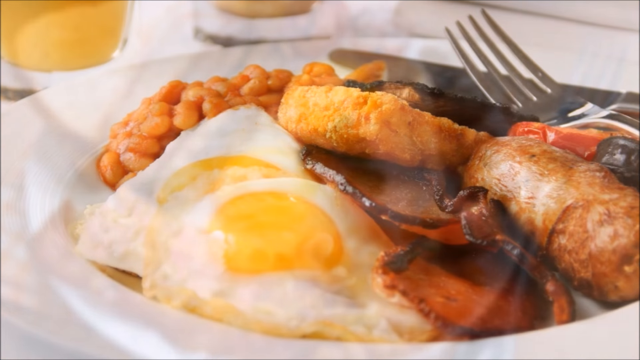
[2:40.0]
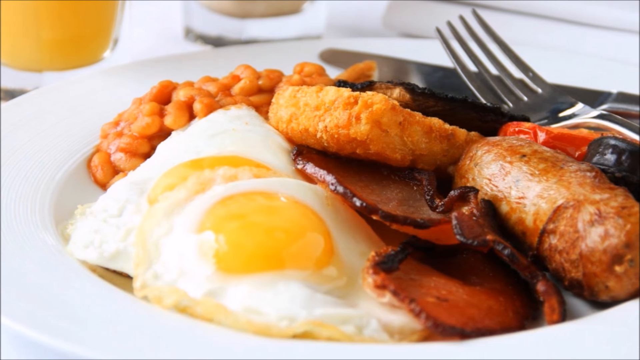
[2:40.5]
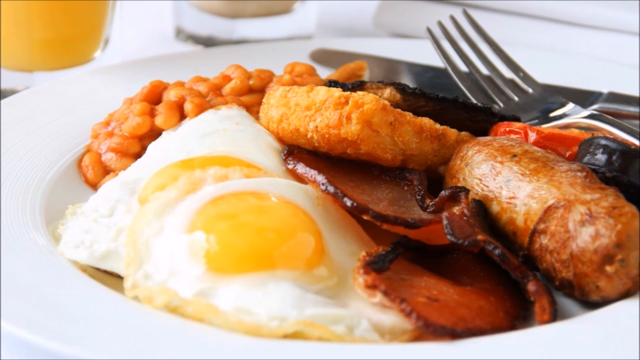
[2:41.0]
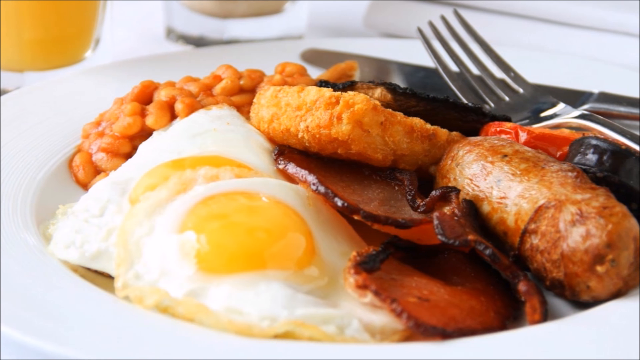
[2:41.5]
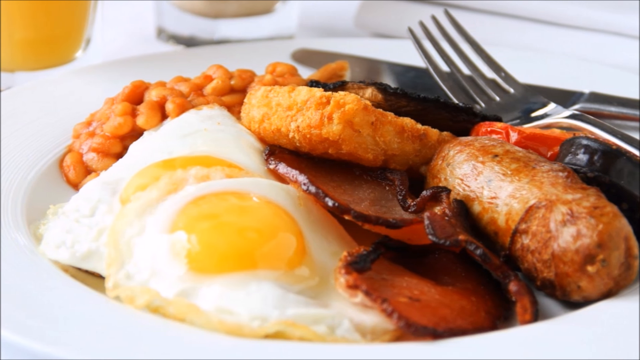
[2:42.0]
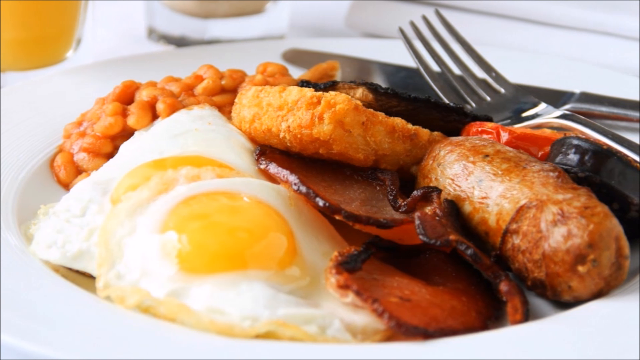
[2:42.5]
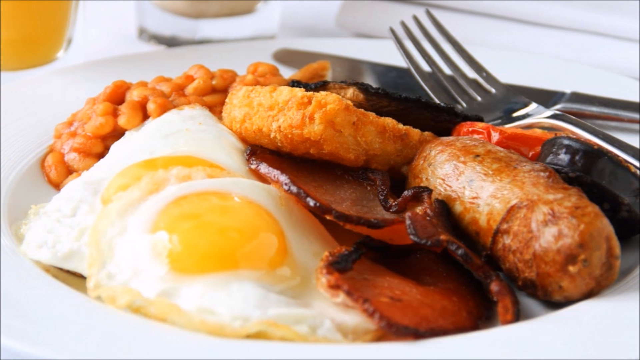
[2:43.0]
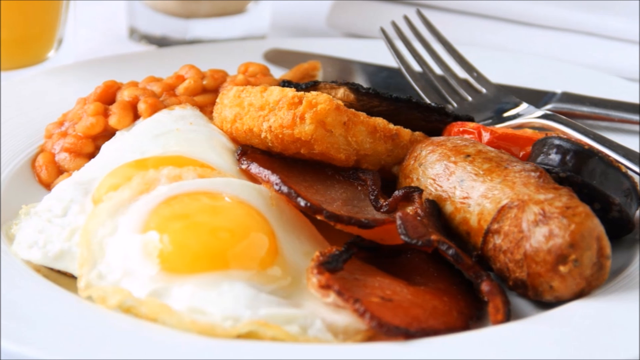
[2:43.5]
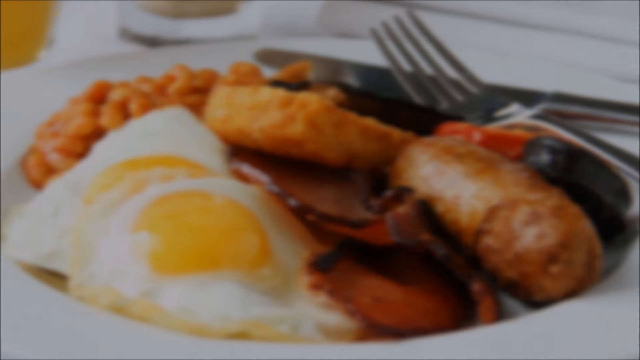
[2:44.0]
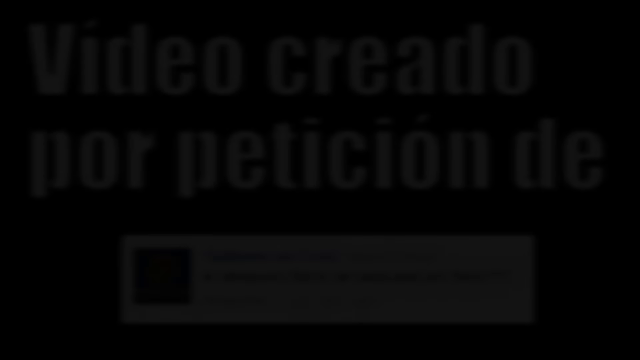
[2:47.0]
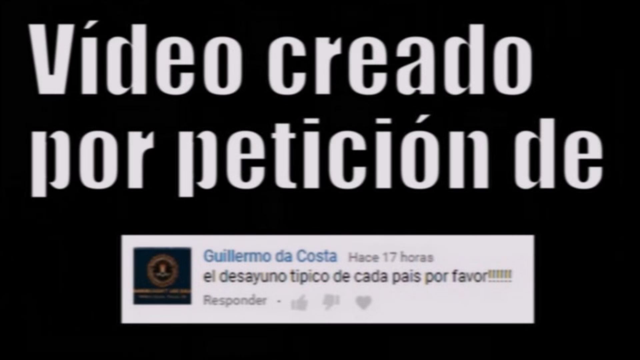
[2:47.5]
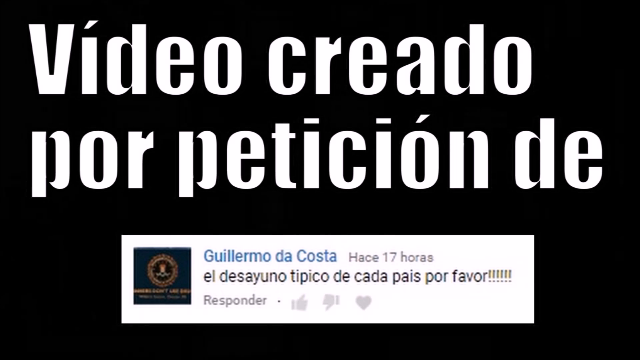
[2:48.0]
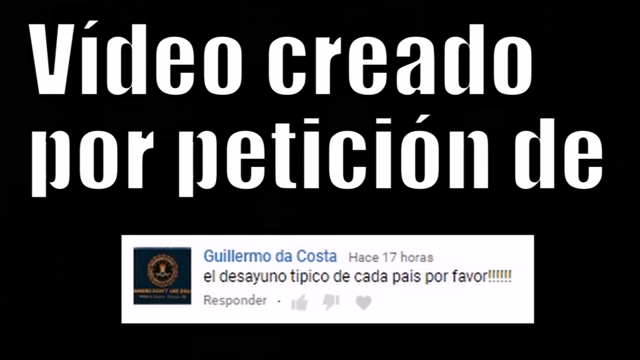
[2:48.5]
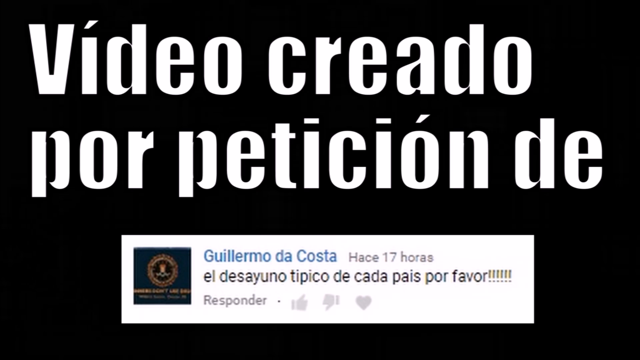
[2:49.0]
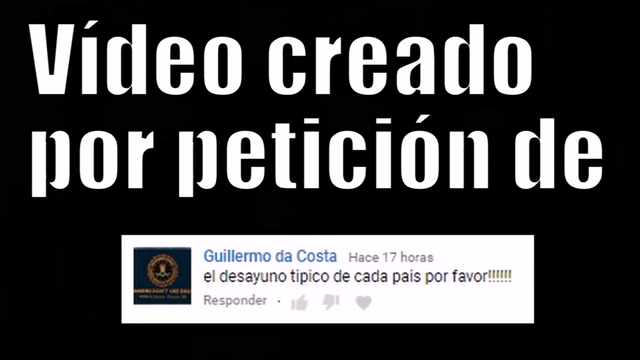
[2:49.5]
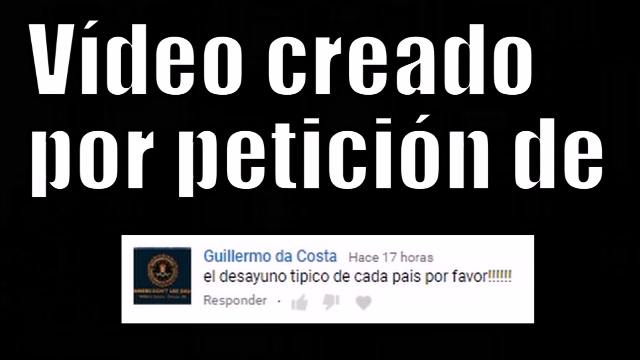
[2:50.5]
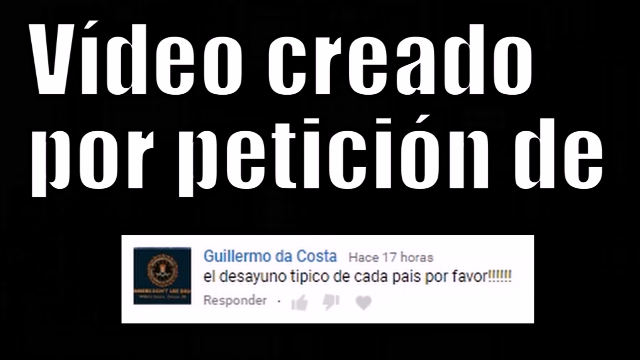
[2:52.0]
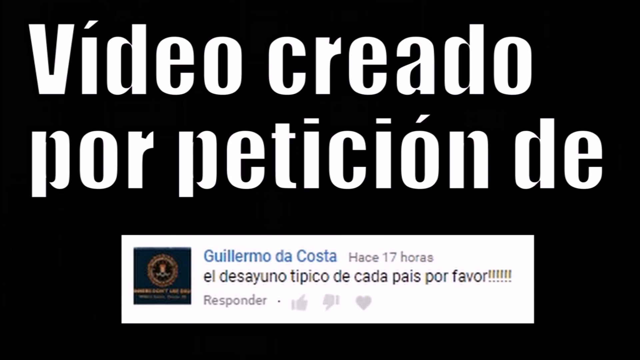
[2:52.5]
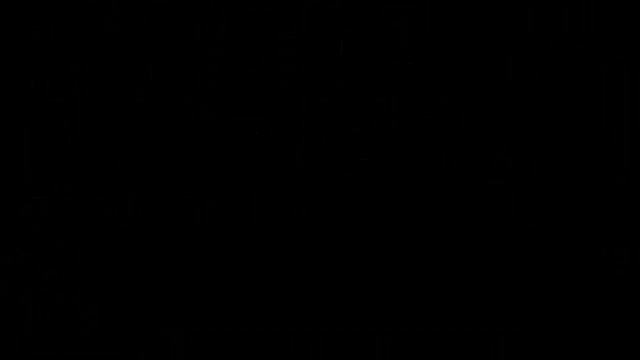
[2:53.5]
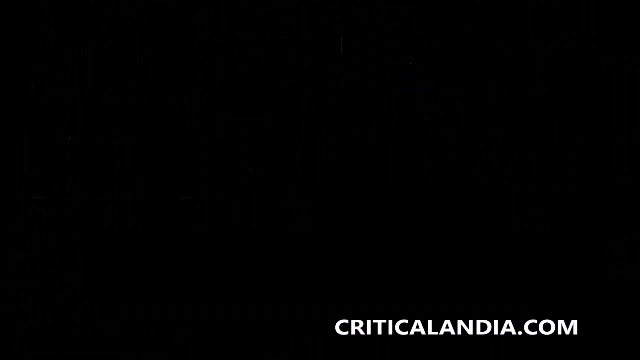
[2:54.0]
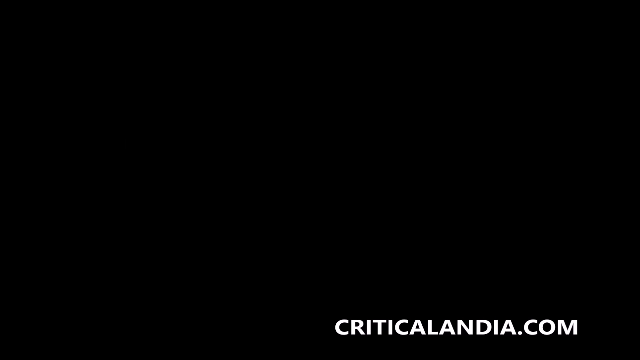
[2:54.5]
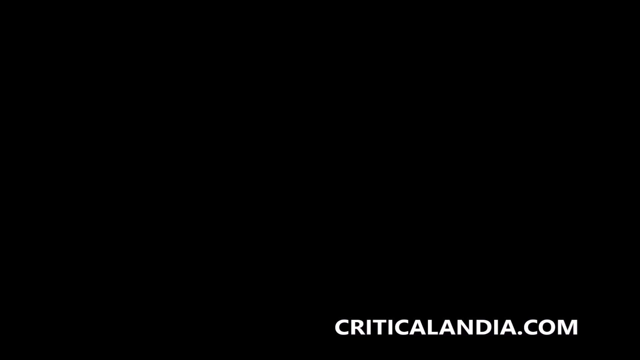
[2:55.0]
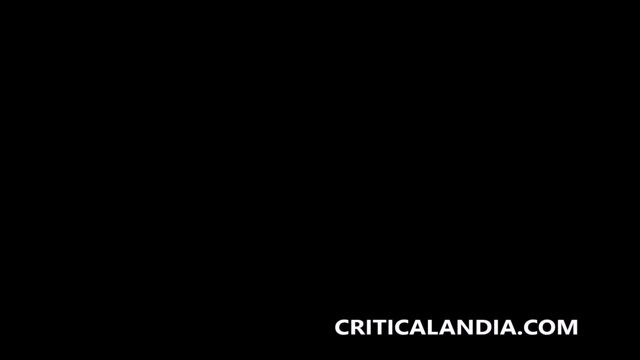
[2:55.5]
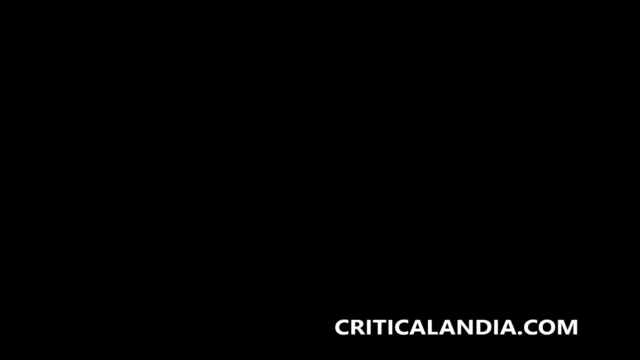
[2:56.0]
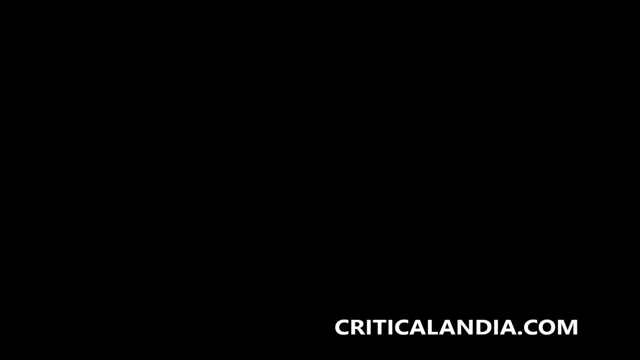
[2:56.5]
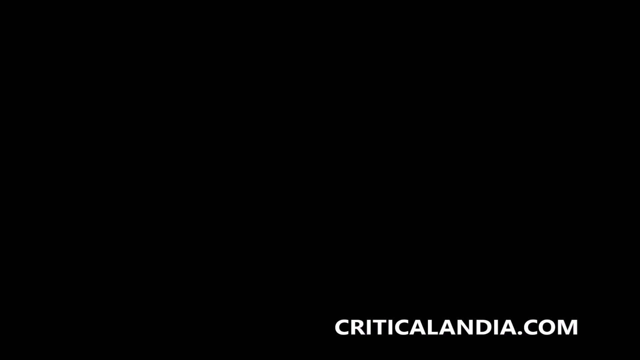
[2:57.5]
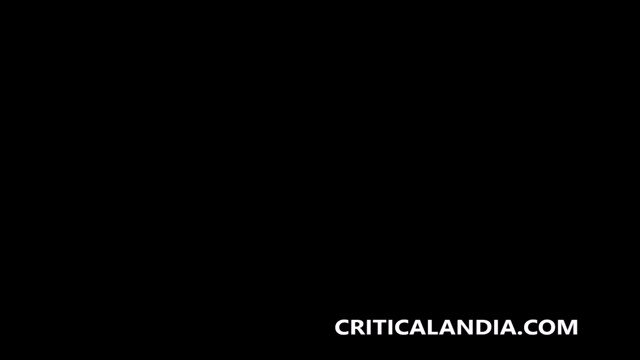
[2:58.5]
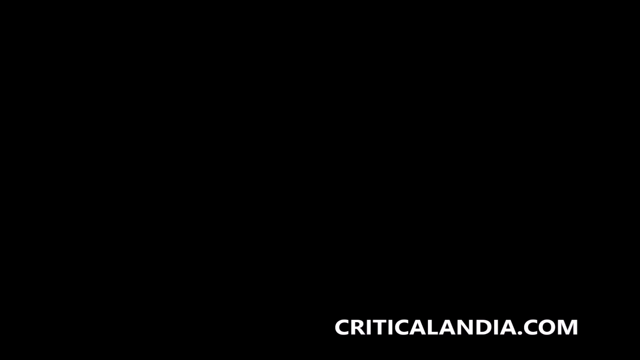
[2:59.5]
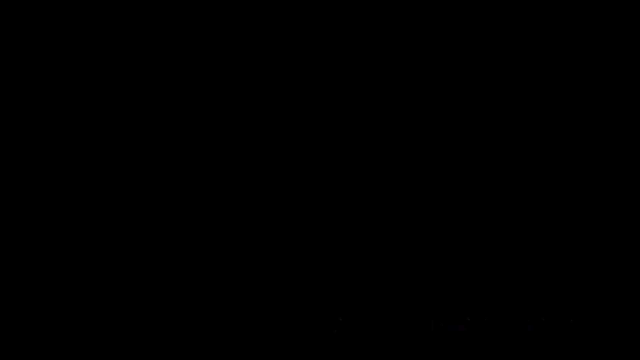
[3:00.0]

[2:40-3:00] Another breakfast fades in, a closer view of a white plate with two fried eggs on the left, then bacon, then some kind of muffin or pastry, then a sausage, with a pile of beans in the back and a fork and knife in the upper right corner. The view pans to the right and blacks out. Text in Impact font reads "Video creado por Peticion de...". Underneath is a white square with an inset navy square containing some kind of seal, and the text "Guillermo de Costa hace 17 horas el desayuno típico de cada país por favor." followed by "Responder", with thumbs up and thumbs down buttons and a heart button. This blacks out, and the white text "criticalandia.com" appears in the bottom right corner of the screen.